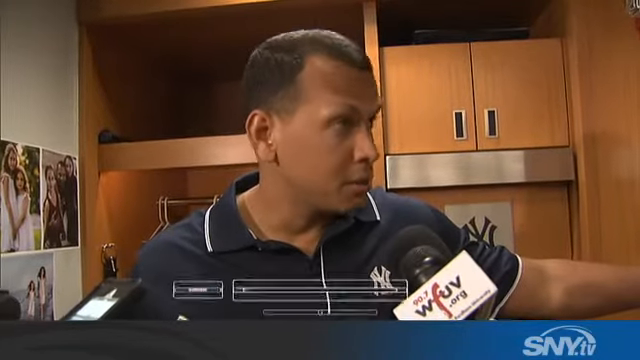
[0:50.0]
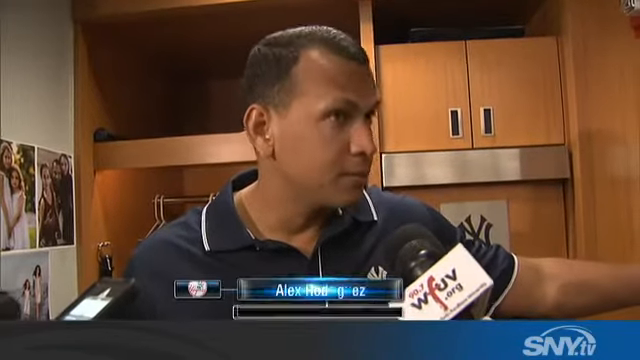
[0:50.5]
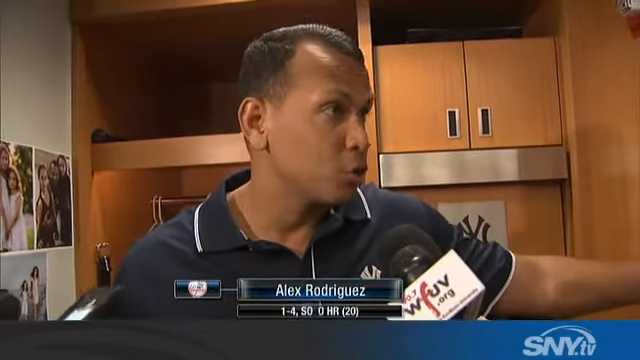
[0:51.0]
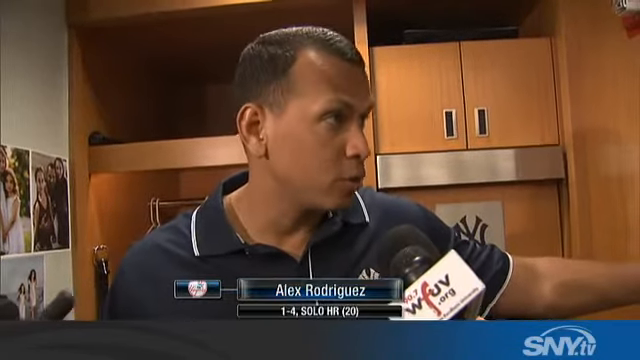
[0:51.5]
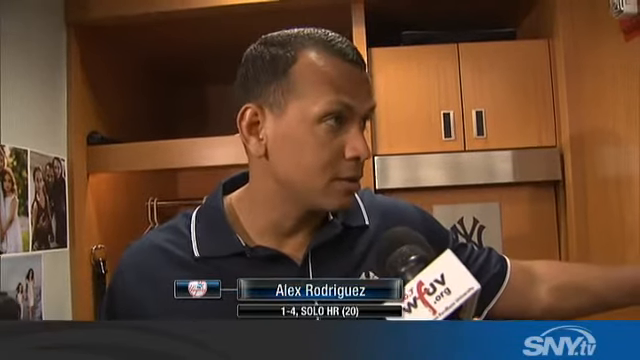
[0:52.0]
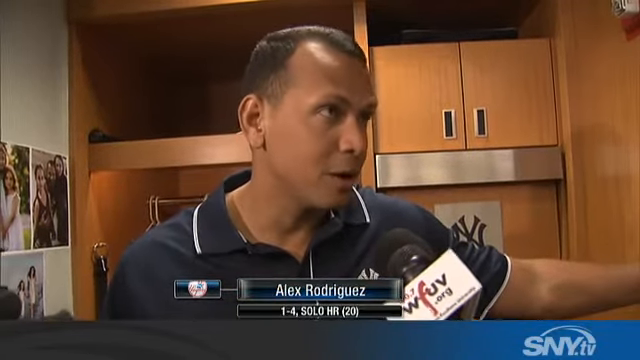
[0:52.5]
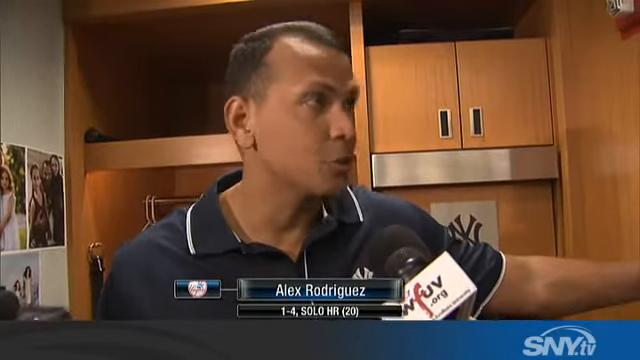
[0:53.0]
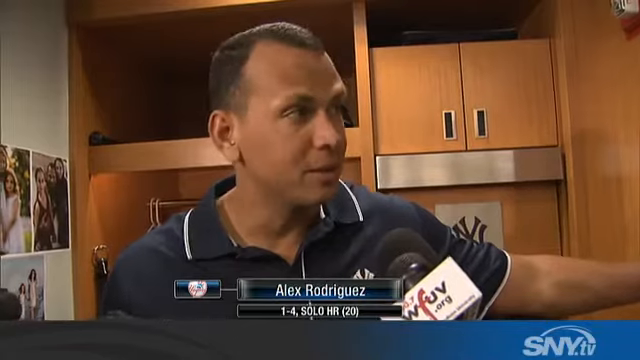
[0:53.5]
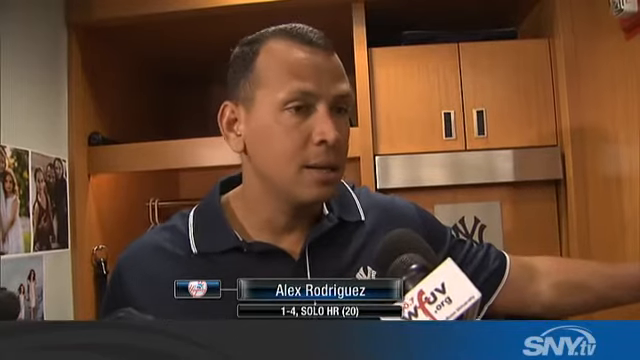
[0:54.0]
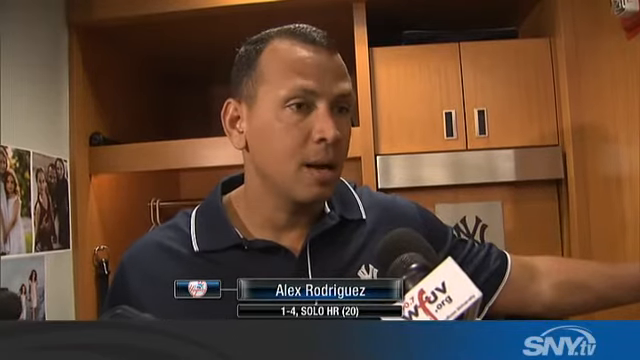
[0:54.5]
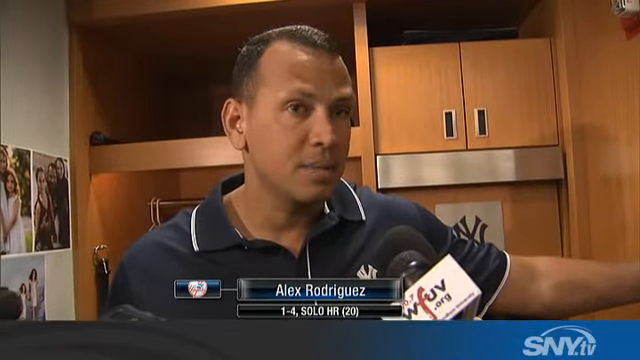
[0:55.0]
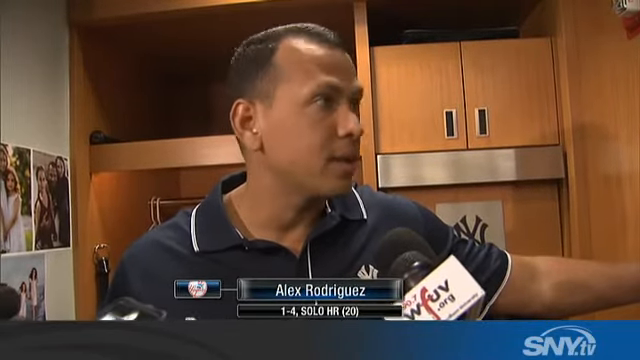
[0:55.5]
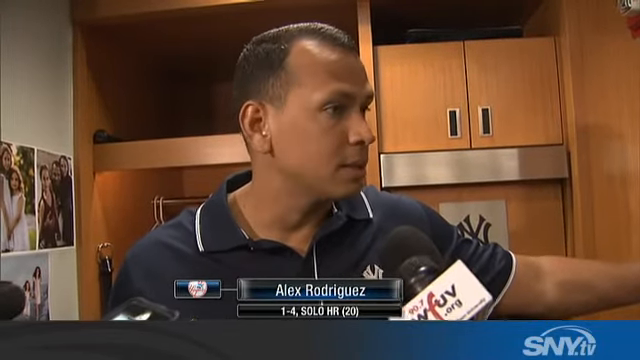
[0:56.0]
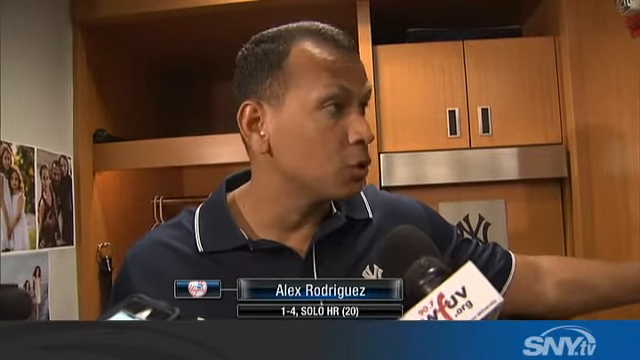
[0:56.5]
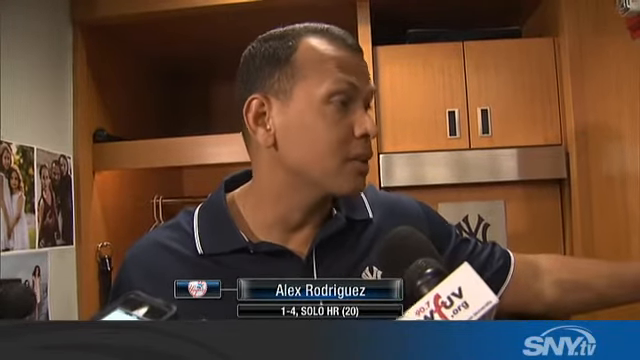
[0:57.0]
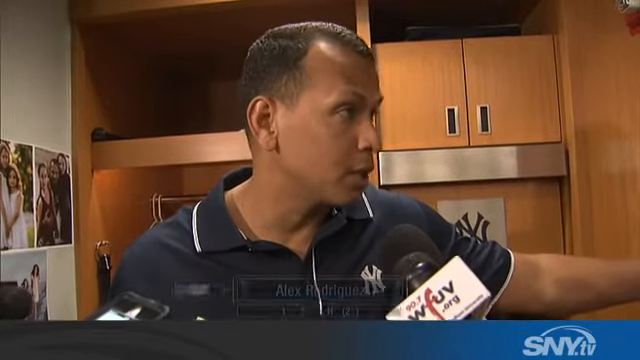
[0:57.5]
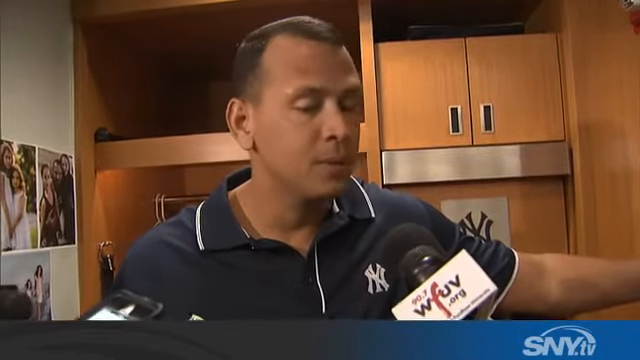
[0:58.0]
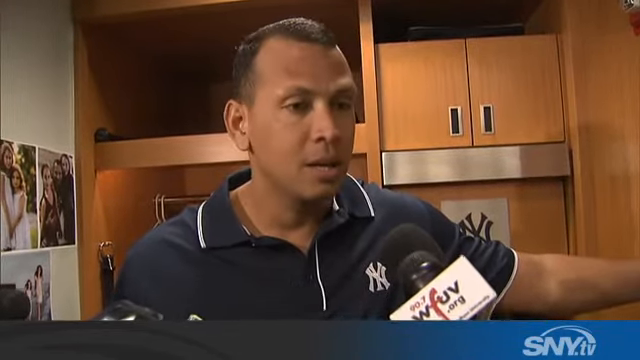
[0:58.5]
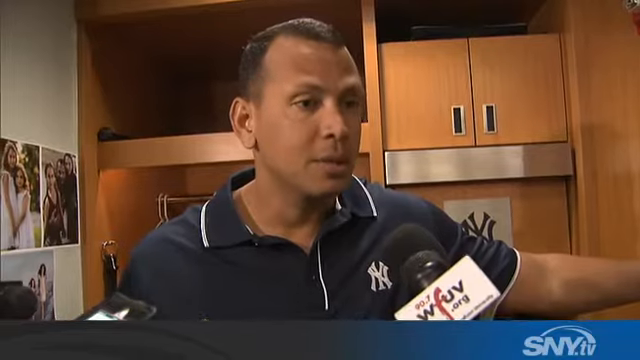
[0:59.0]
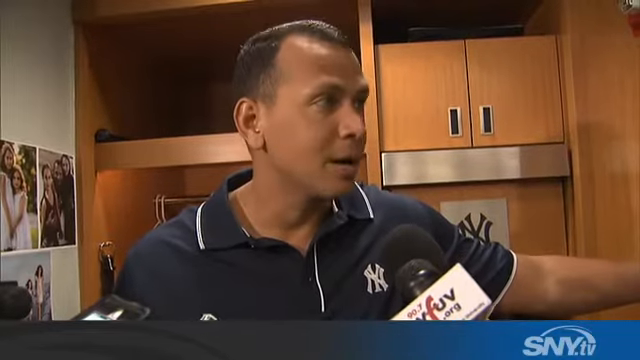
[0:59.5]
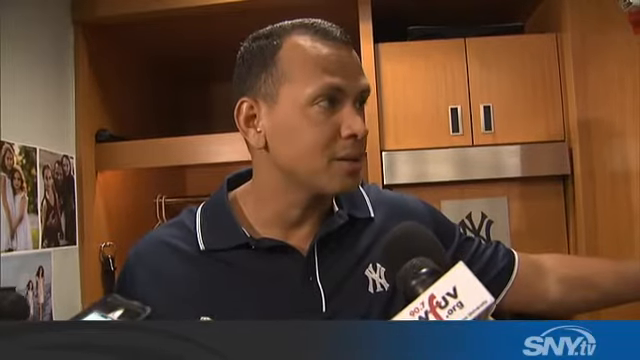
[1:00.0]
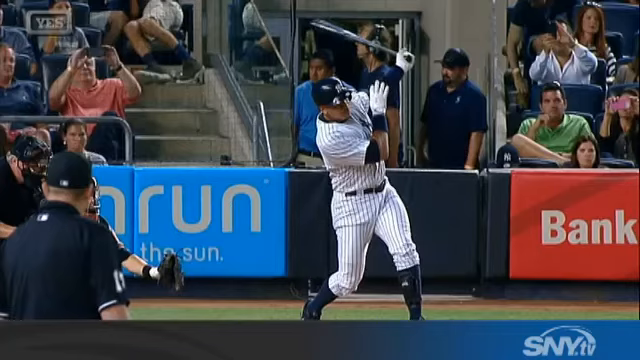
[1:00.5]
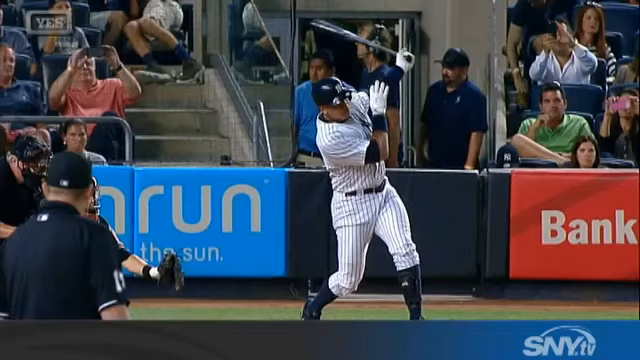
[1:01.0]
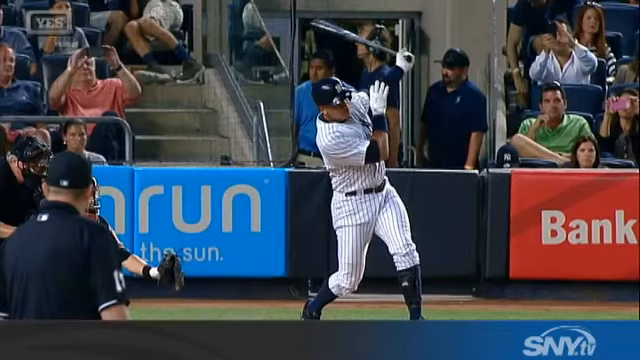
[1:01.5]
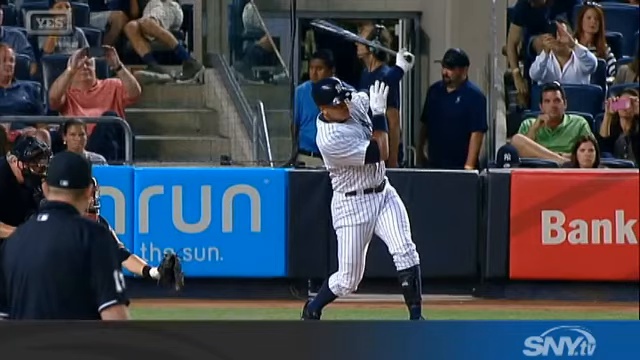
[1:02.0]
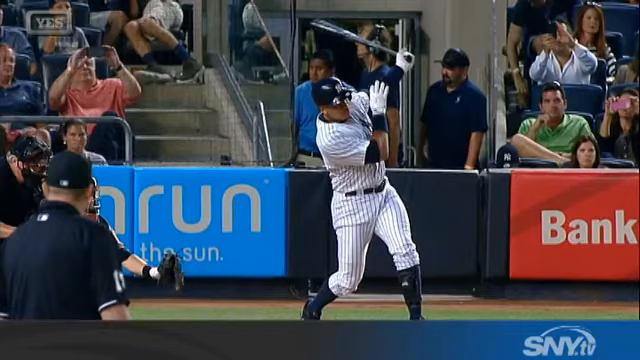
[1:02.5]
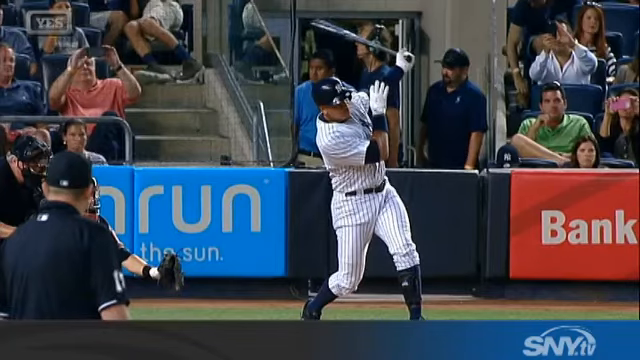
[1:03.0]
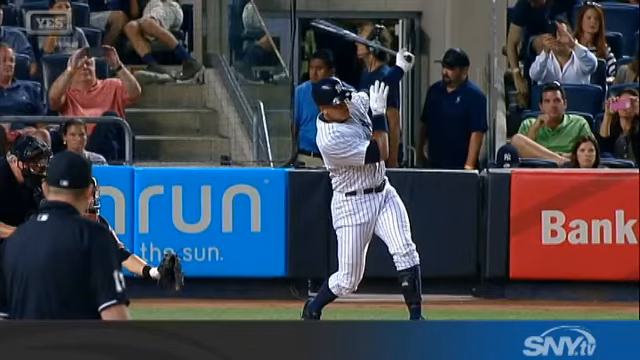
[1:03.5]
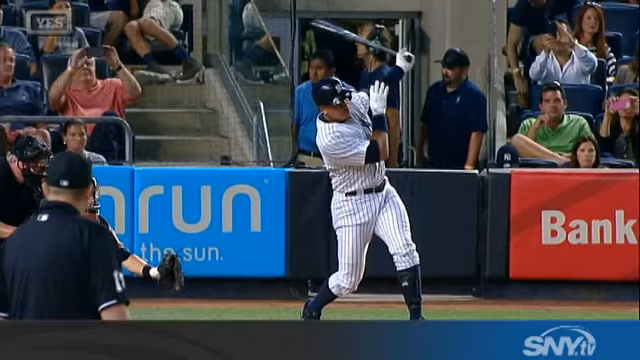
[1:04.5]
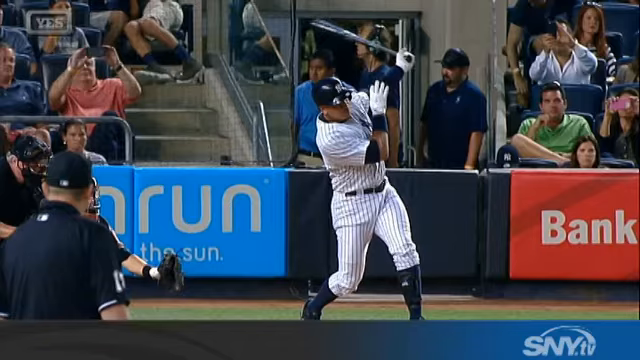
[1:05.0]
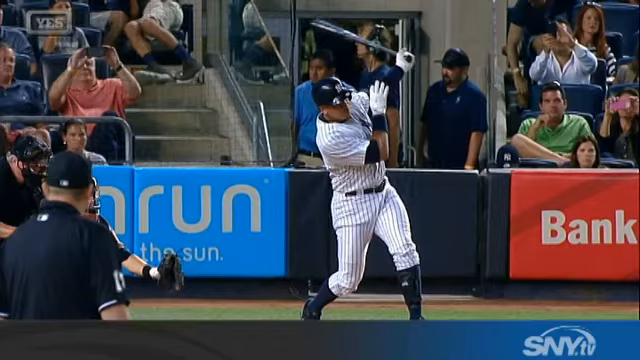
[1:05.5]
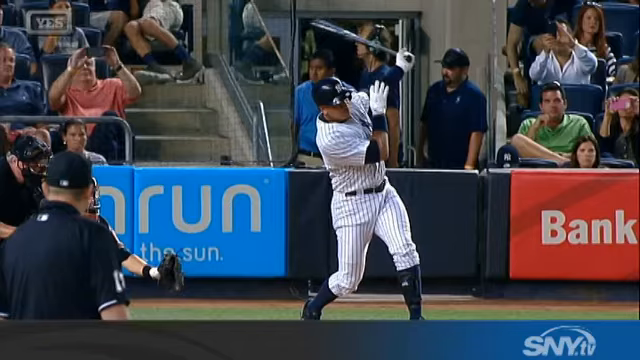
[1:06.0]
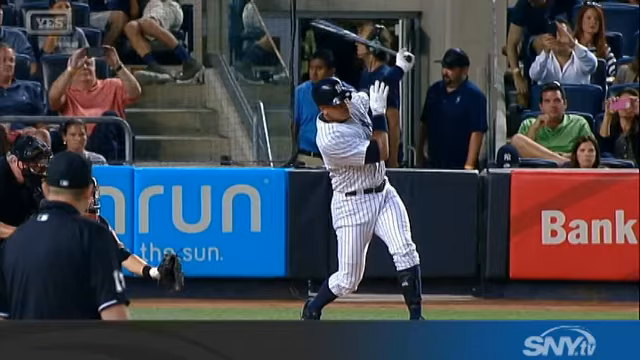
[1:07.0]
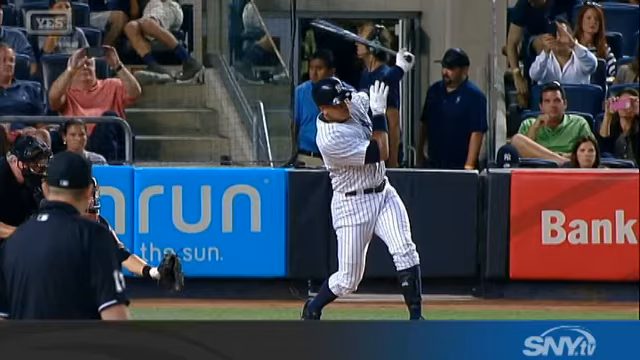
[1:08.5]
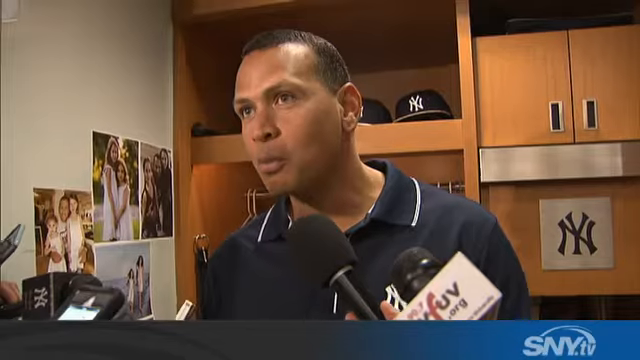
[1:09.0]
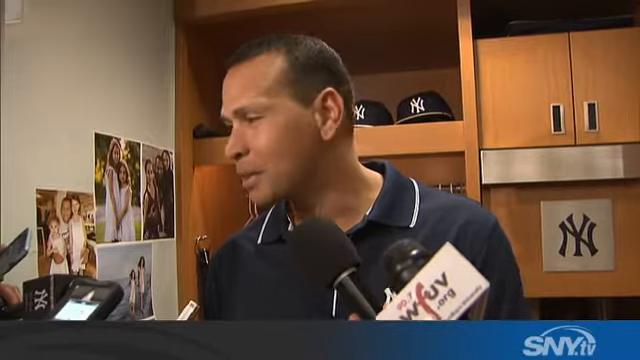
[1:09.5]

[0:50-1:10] Alex Rodriguez, who was playing for the Yankees at the time, appears to be at his area inside the locker room, with wooden cabinets visible. He wears a short-sleeved dark blue shirt in the Yankees colors of dark blue and white. Images on the left side of the screen apparently show his family, with two girls wearing white dresses on top, and another hard-to-see image below showing him with the two girls. Under his name is text reading "1-4, solo HR (20)." He talks while looking mostly toward the right side of the screen. Then an image appears of a player, possibly him, in uniform swinging a bat.